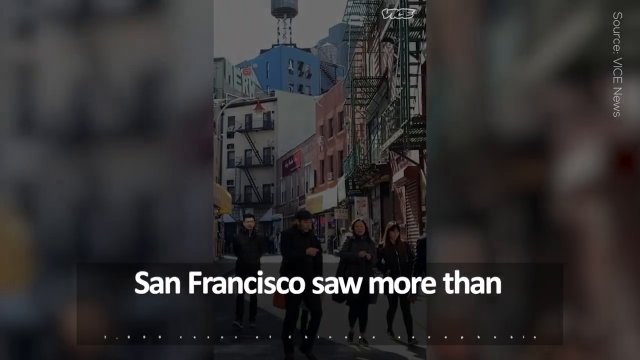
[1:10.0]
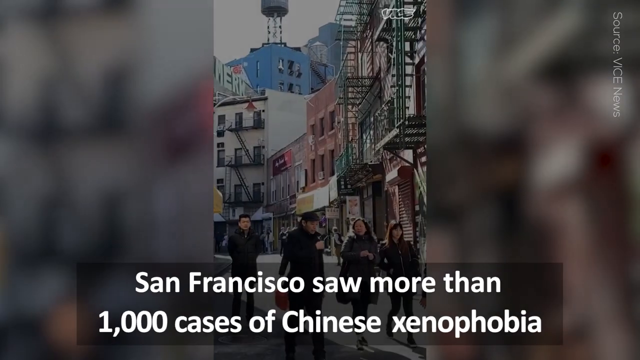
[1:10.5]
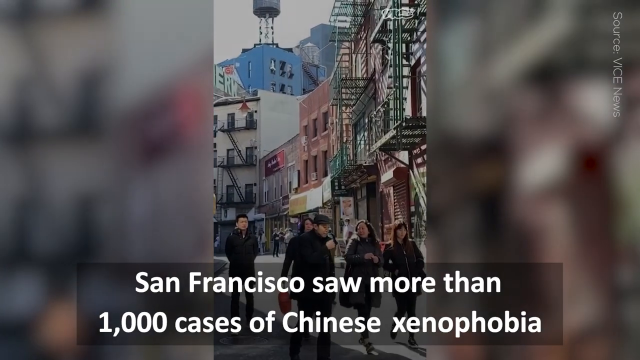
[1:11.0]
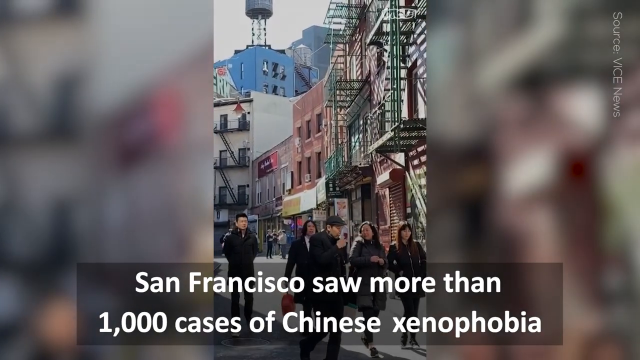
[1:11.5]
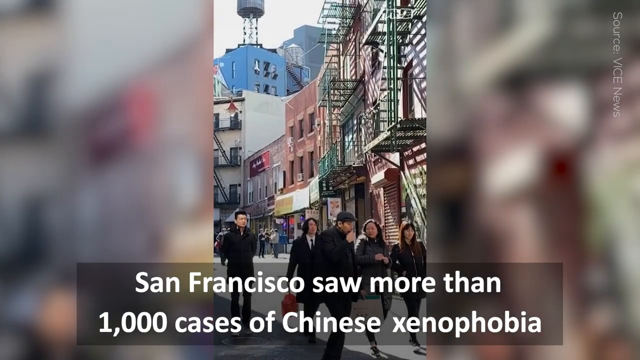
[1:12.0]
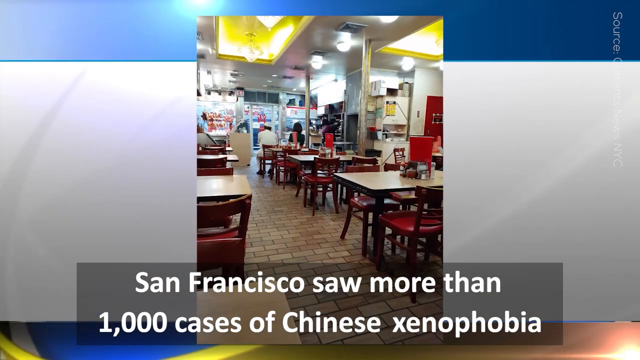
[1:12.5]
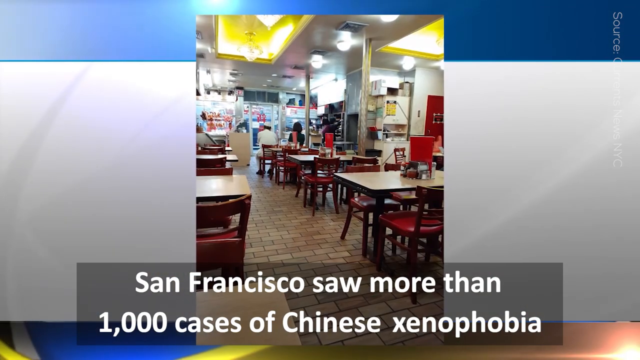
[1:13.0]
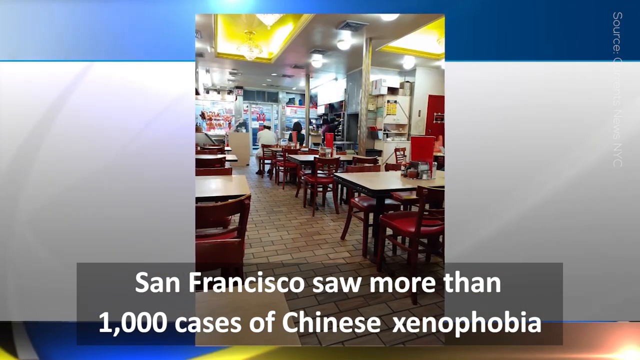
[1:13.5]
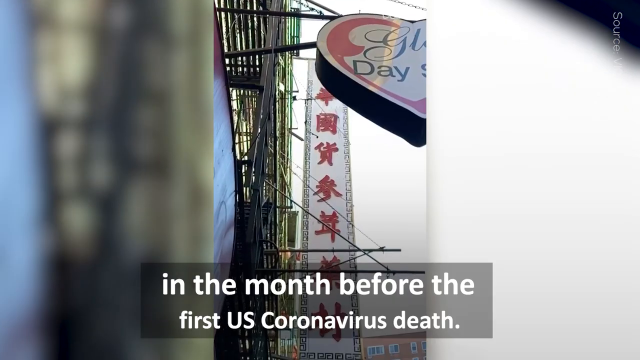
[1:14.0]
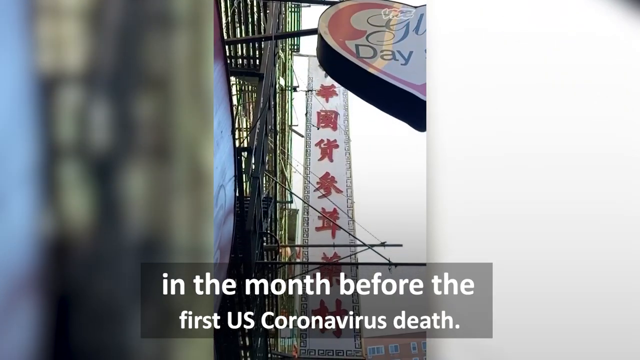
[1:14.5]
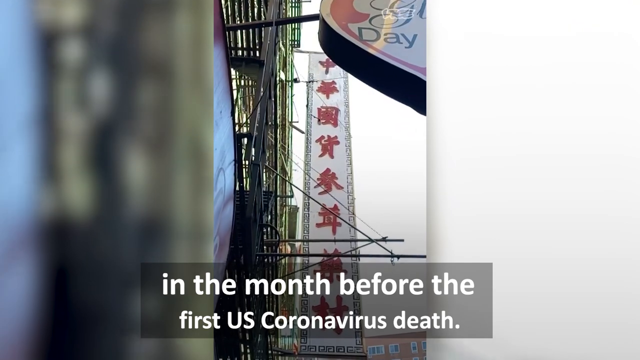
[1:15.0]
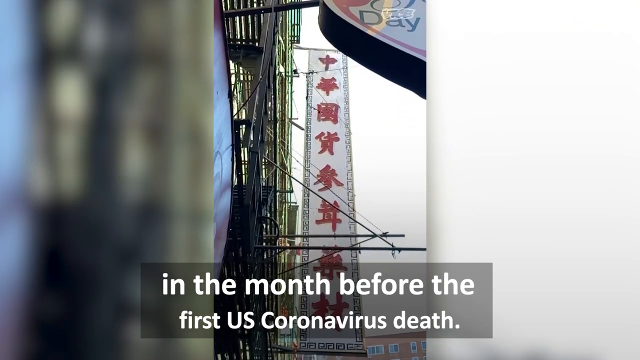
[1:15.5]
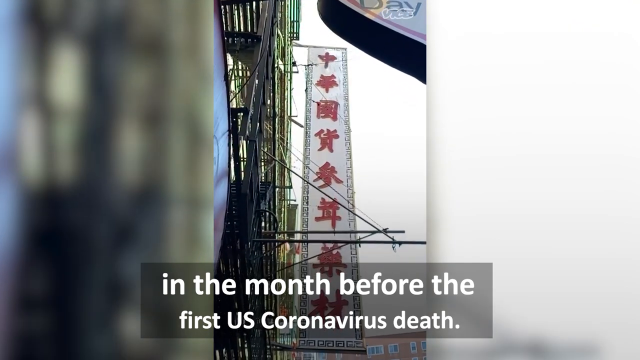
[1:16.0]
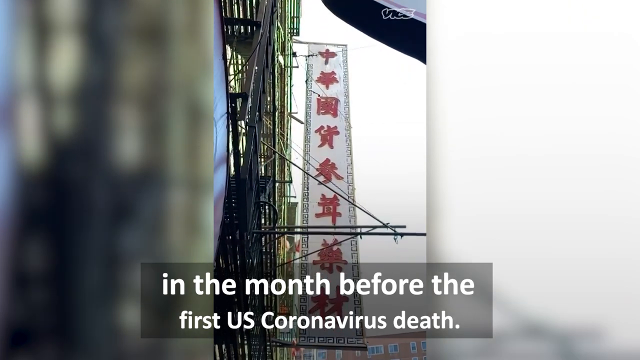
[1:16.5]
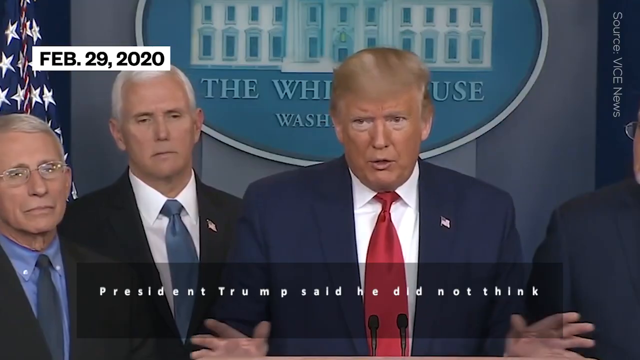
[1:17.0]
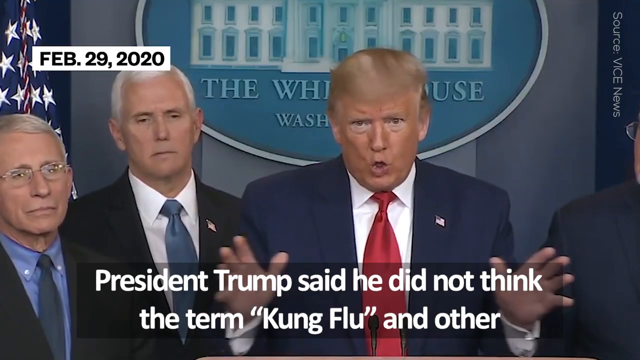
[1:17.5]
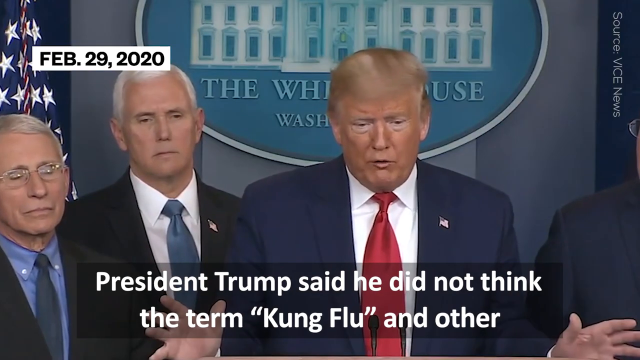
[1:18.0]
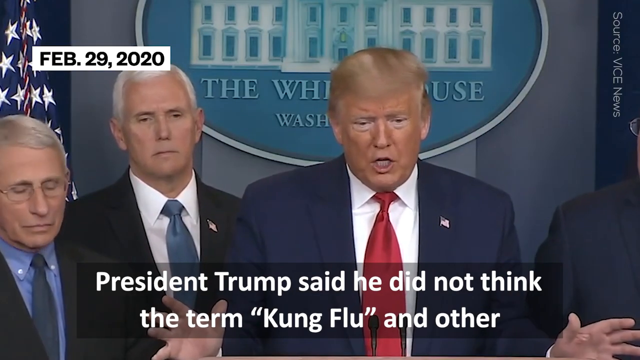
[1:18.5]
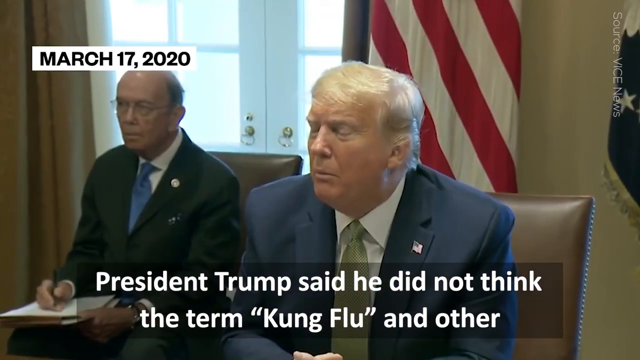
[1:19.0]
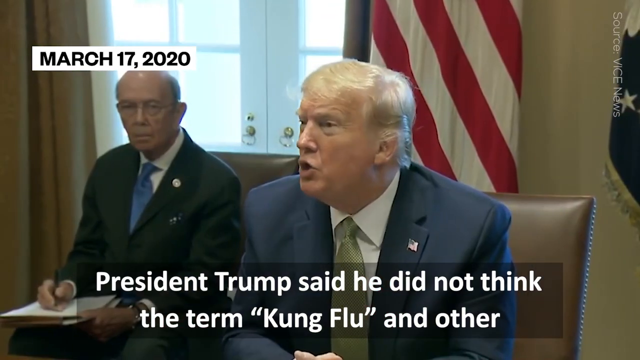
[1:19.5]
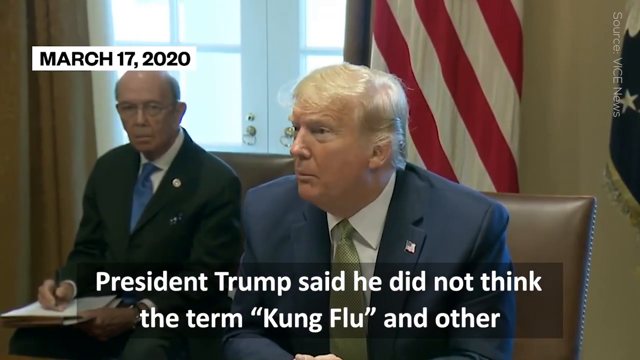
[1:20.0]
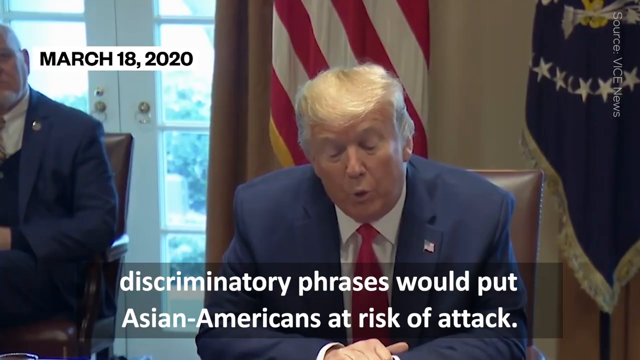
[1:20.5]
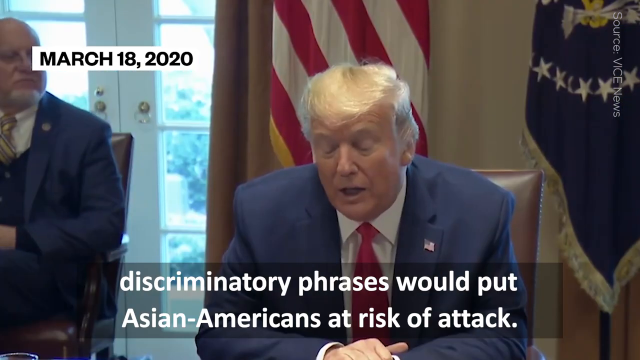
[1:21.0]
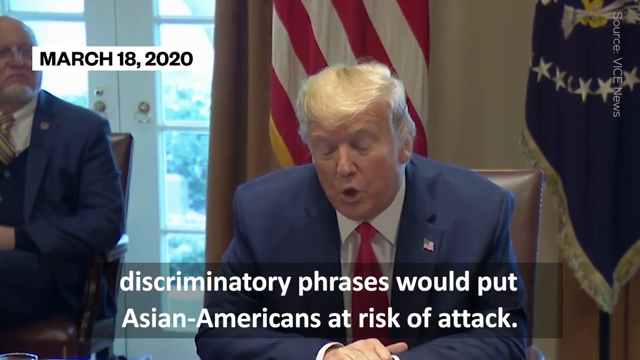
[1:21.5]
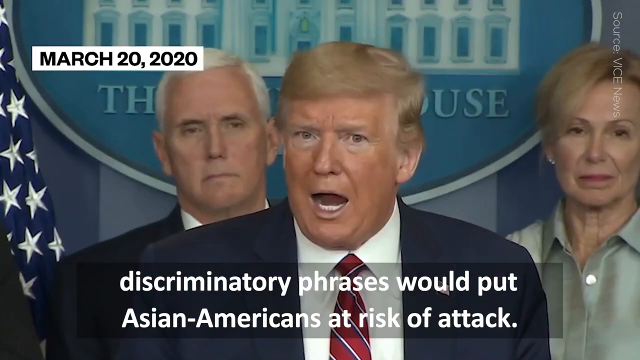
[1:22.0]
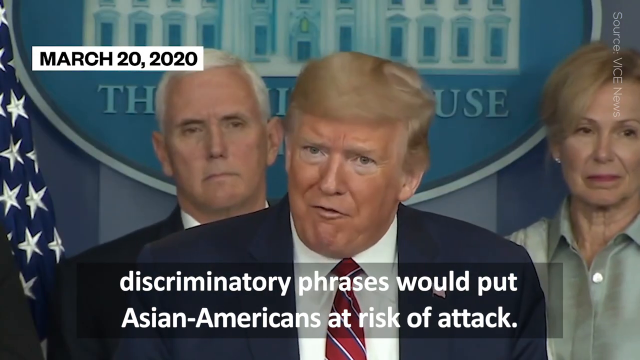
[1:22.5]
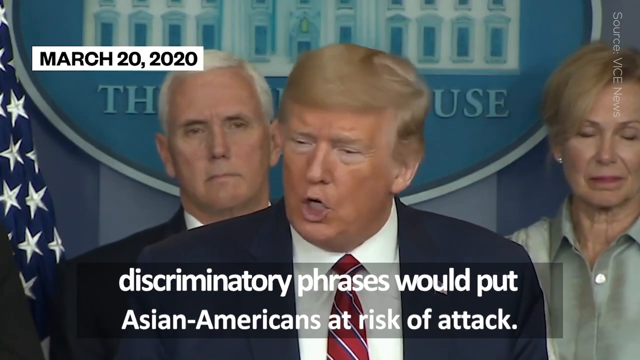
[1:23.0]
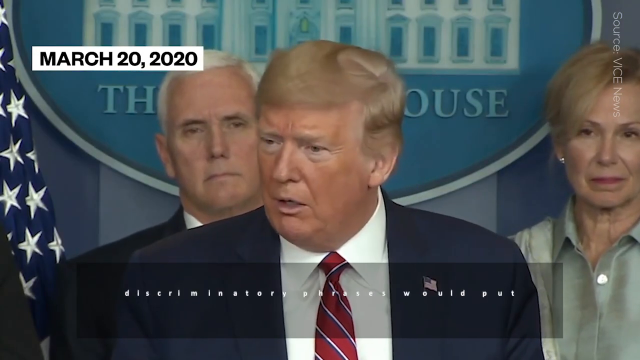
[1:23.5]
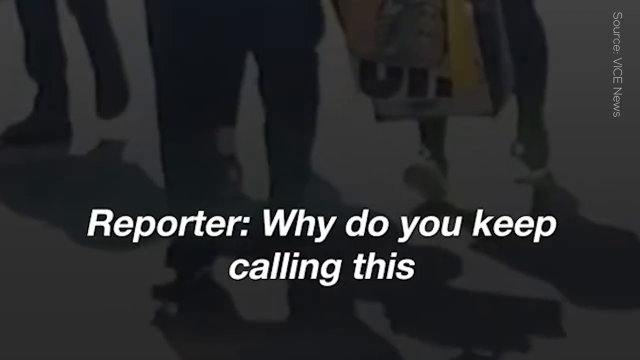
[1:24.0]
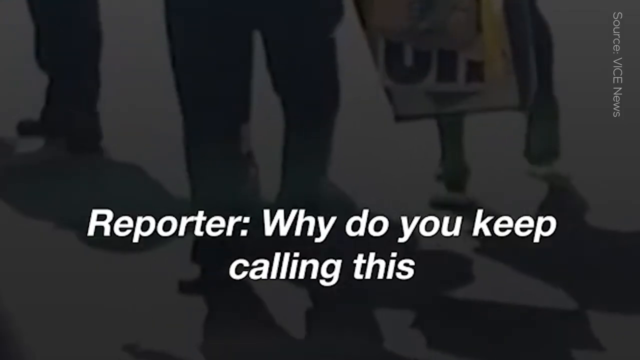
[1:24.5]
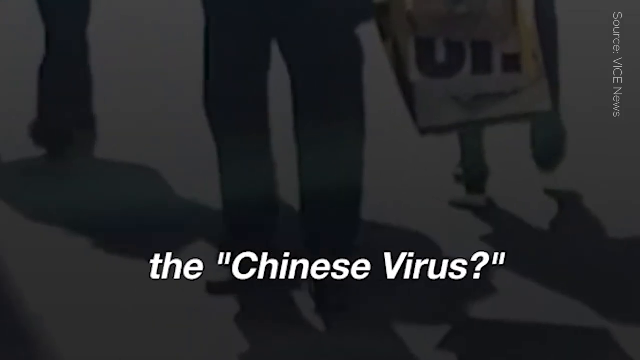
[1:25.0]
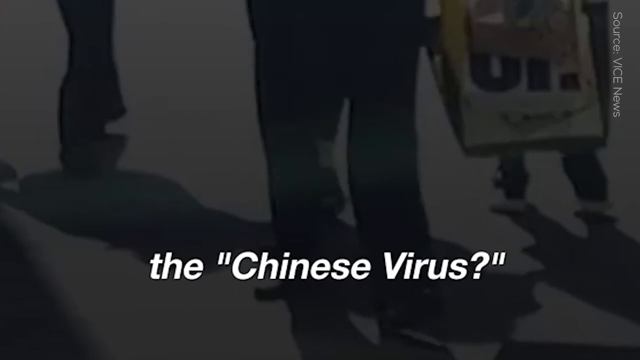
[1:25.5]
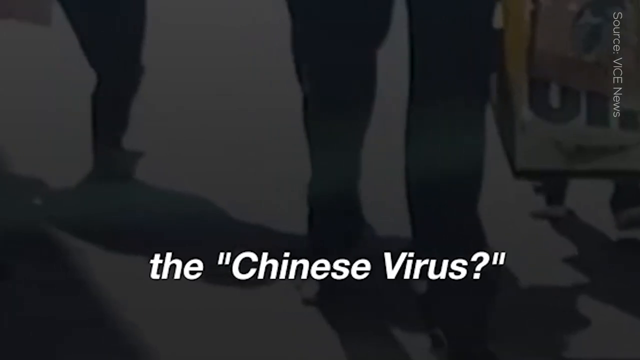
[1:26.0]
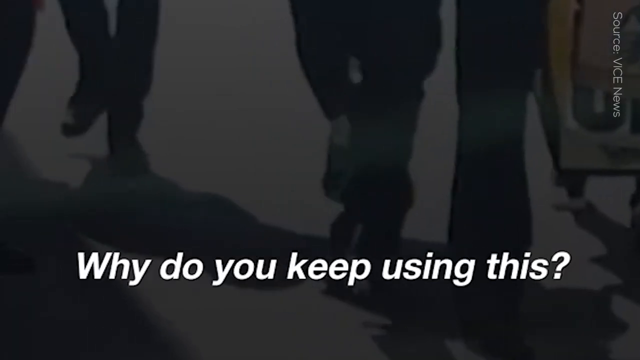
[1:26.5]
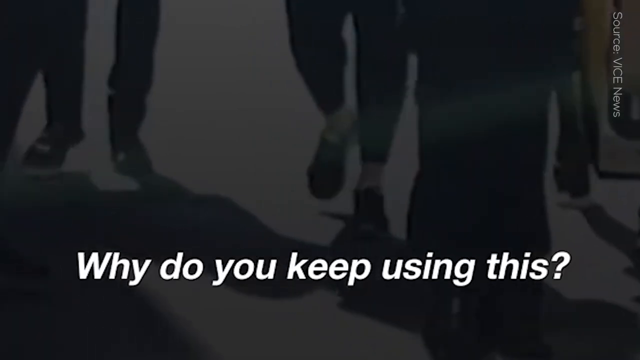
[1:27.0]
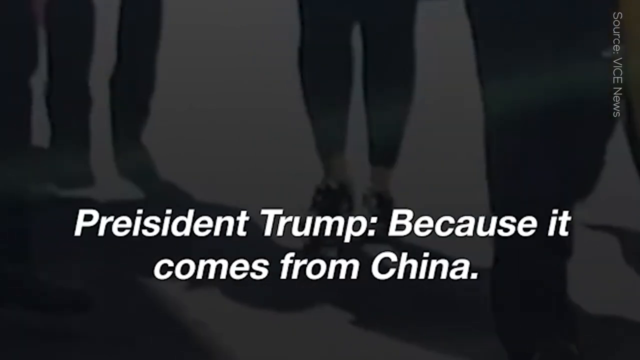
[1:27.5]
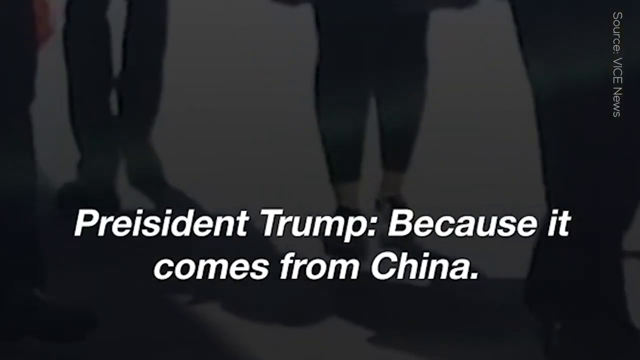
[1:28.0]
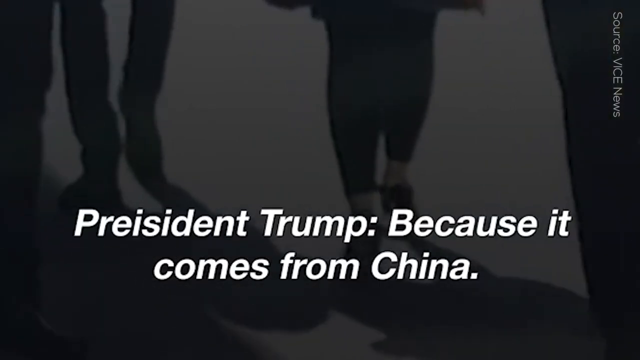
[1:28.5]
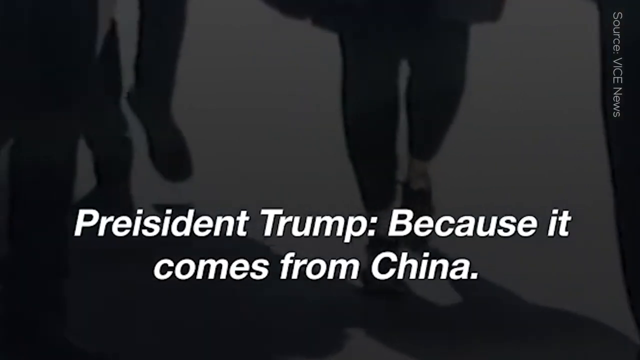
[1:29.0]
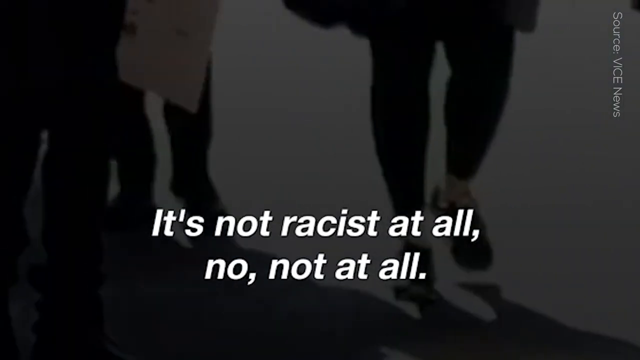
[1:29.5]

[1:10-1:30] Text cites more than 1,000 cases of Chinese xenophobia, shown over people in San Francisco, in the month before the first U.S. coronavirus death. A February 29 date appears with Donald Trump talking, then March 17, 2020, with text saying President Trump did not think the term Kung Fu and other discriminatory phrases would put Asian Americans at risk of attack. Text moves across the screen at a fast pace, including "Chinese virus why do you keep using this" and "it's not racist at all not at all." Buildings of San Francisco are shown, as well as the inside of a Chinese restaurant with packed tables.